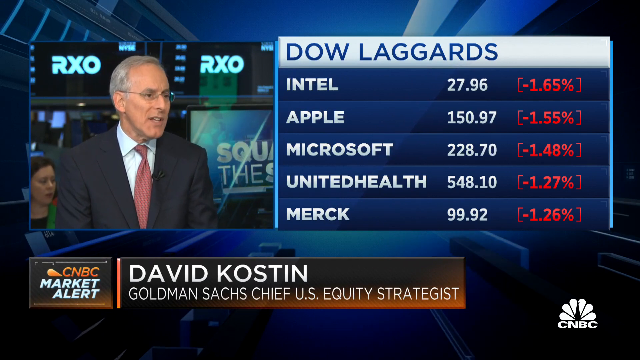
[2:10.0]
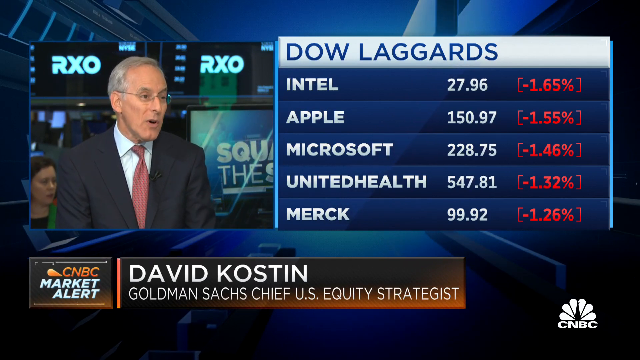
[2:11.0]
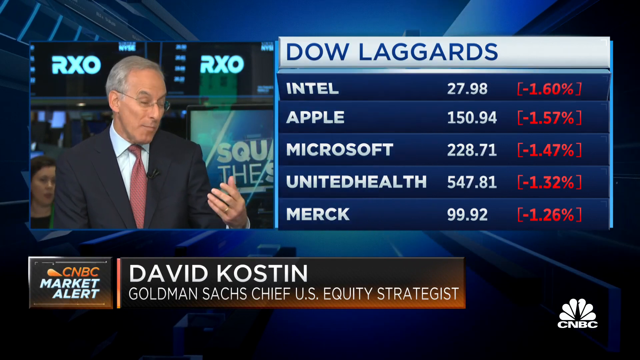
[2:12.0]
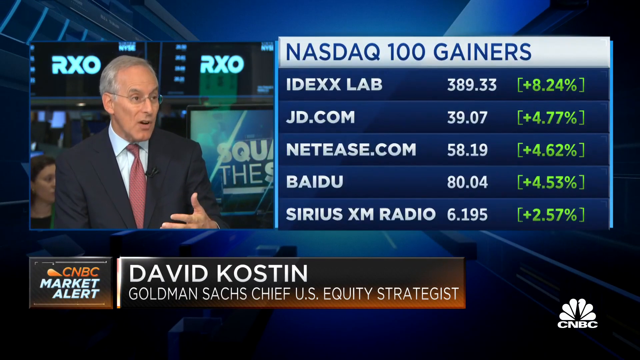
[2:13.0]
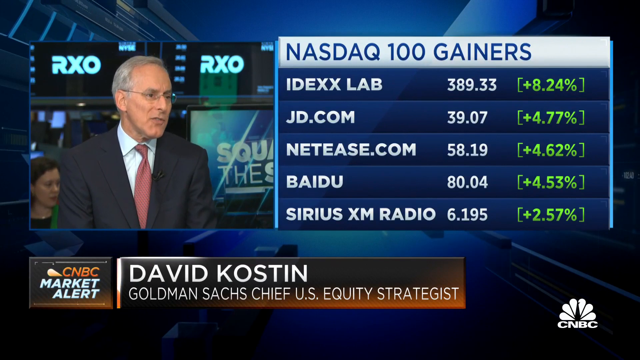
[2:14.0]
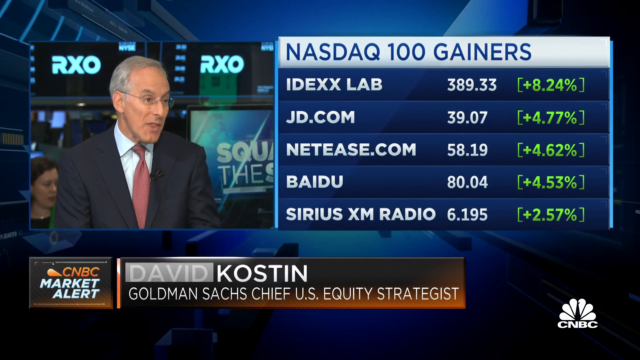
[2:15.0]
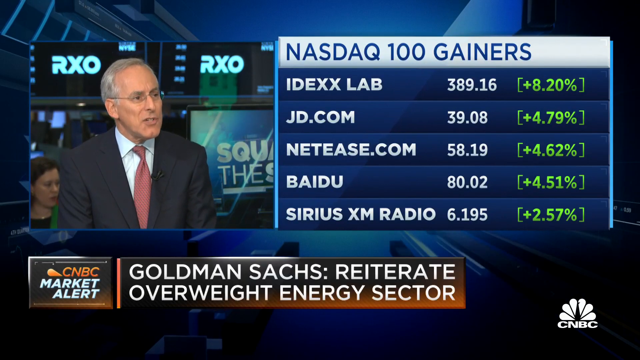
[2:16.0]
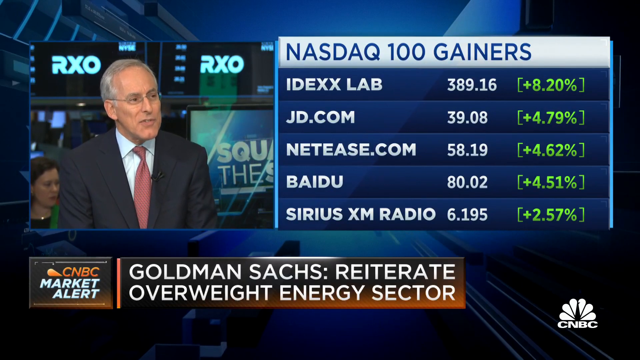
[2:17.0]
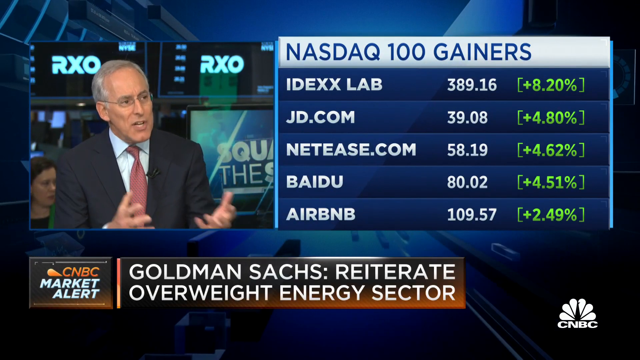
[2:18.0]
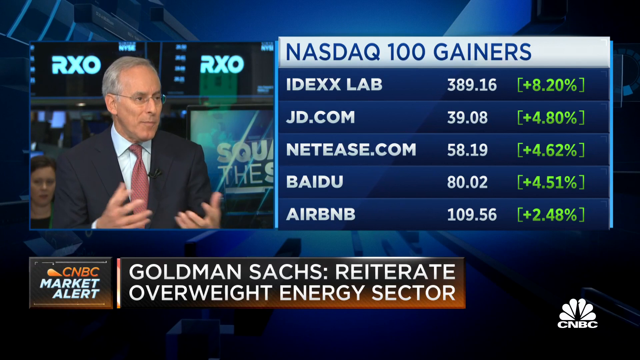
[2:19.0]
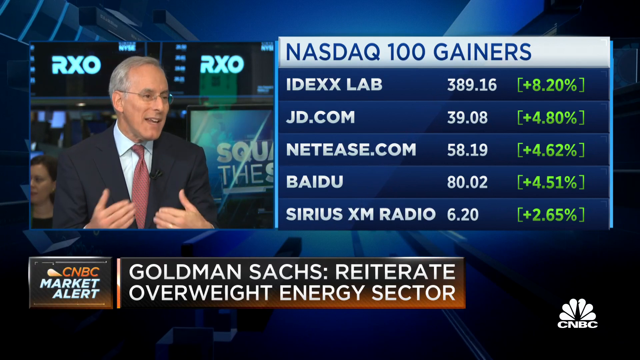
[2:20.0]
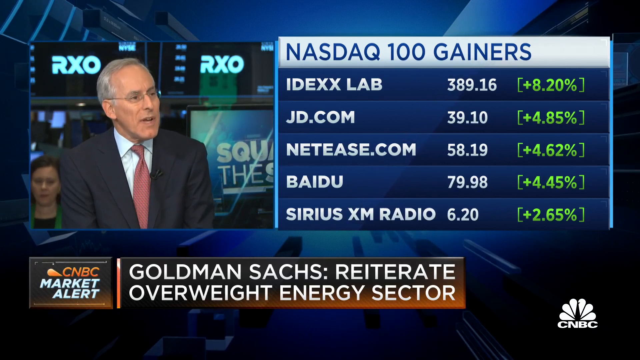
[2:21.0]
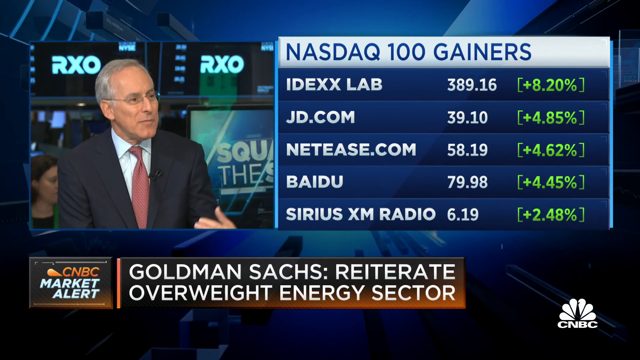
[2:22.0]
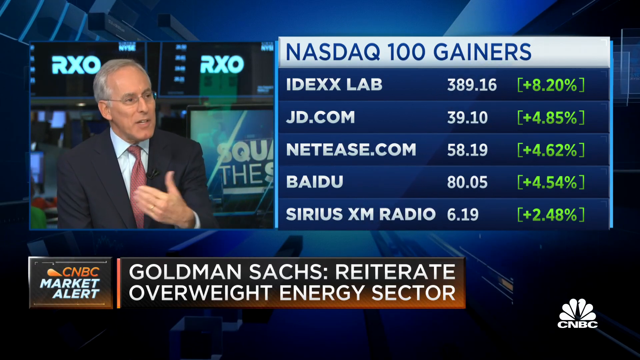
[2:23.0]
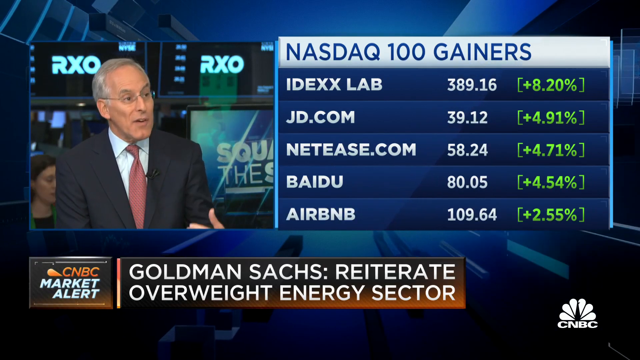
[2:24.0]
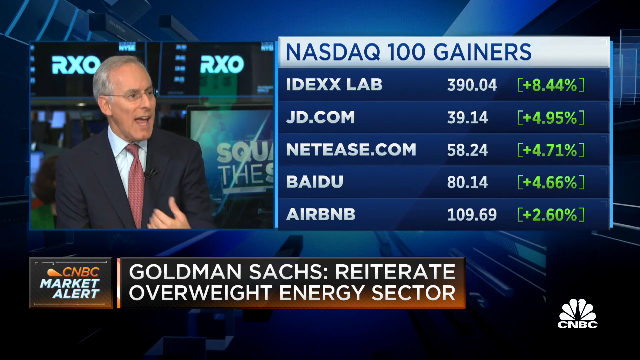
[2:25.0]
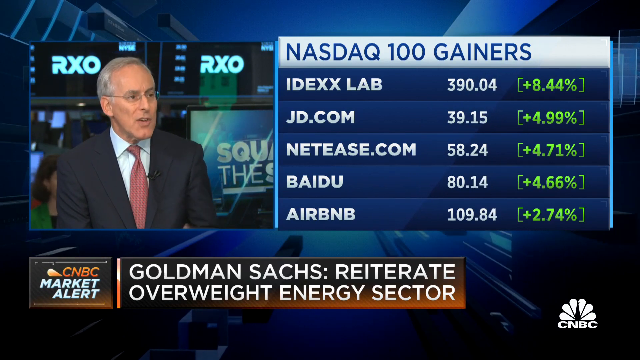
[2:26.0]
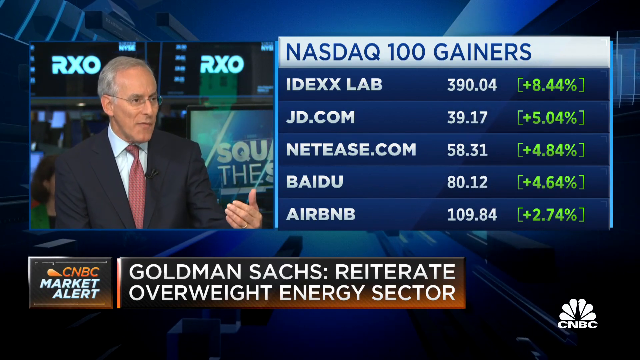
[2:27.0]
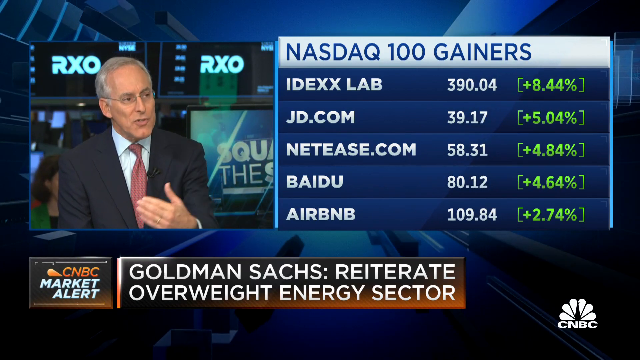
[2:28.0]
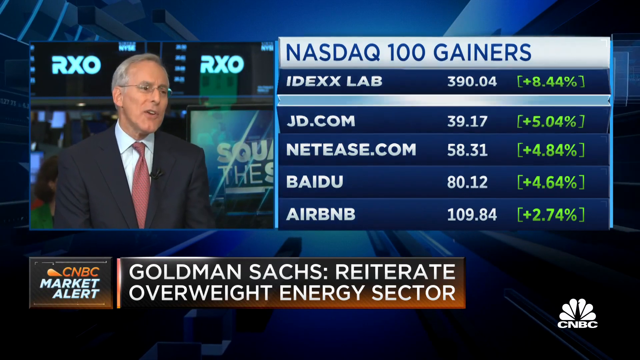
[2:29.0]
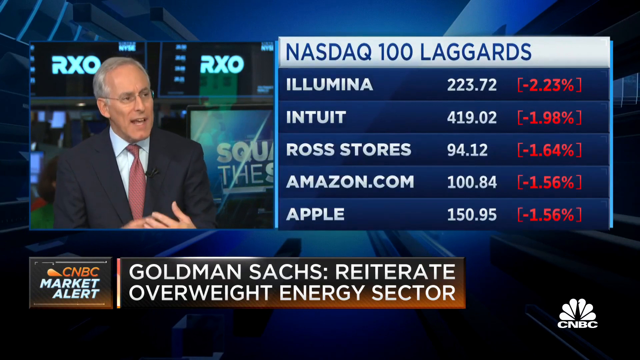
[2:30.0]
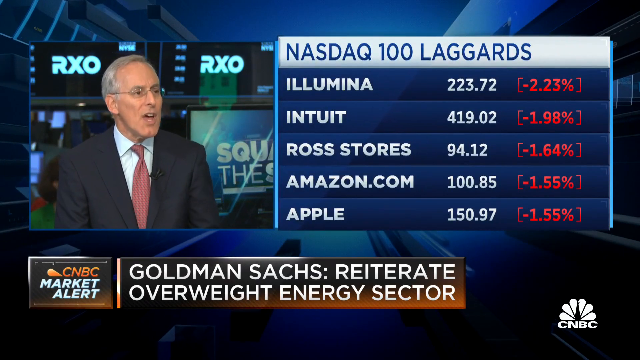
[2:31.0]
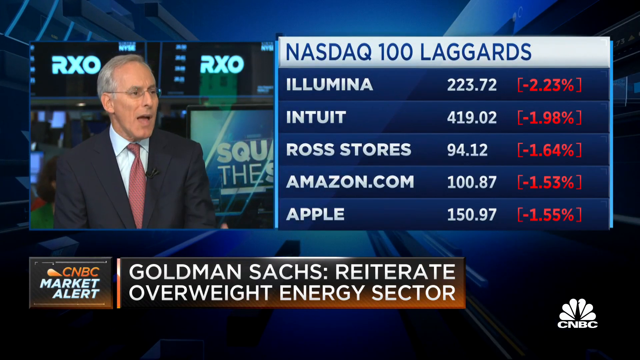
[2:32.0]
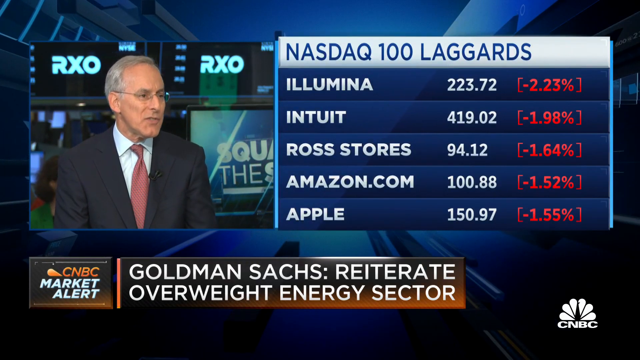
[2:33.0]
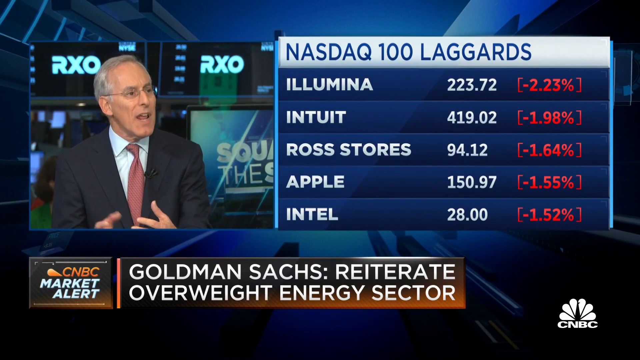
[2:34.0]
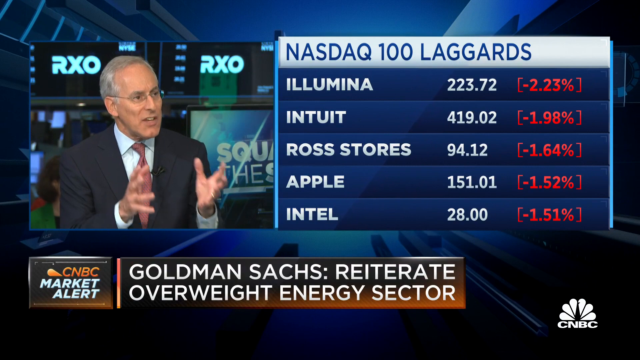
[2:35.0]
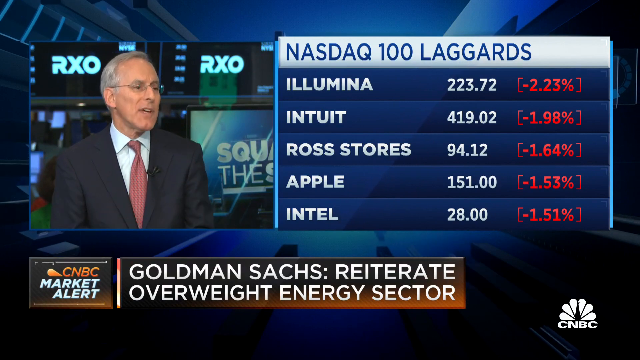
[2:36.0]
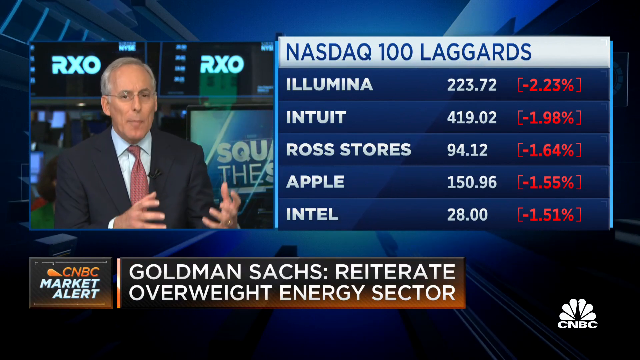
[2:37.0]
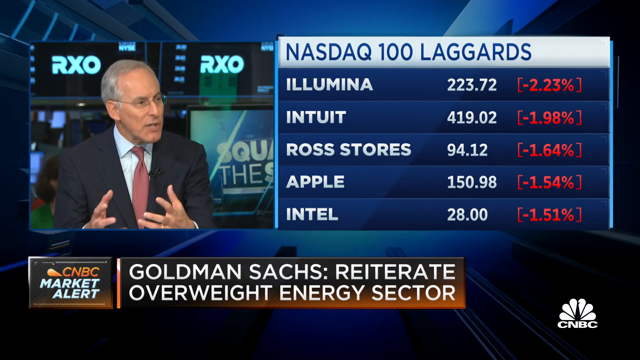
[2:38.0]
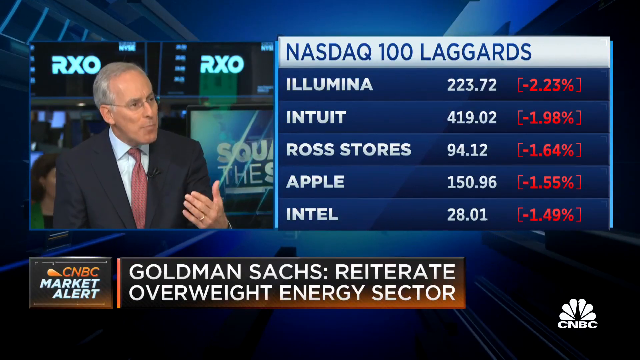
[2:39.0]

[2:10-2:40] David Kostman is still talking, with the four people still at the panel. He says Goldman Sachs reiterates overweight on the energy sector. A NASDAQ 100 gainers list shows Index Lab up over 8%, JD.com up almost 4.8%, Nettease.com up 4.62, Baidu up 4.51% and Airbnb up 2.49%, all in green. Then a NASDAQ 100 laggards list shows Illumina down 2.2, Intuit down 1.98%, Raw stores down 1.64, Amazon.com down 1.55% and Apple down 1.55%. The video ends with David still talking.